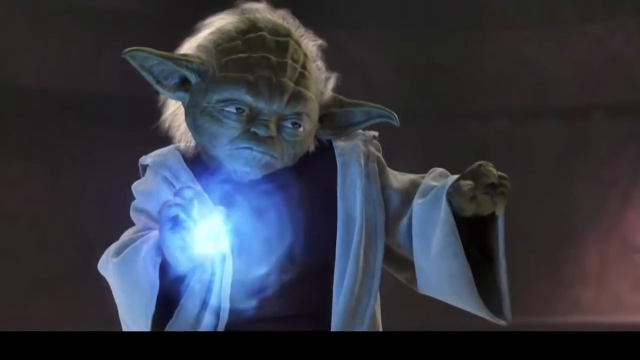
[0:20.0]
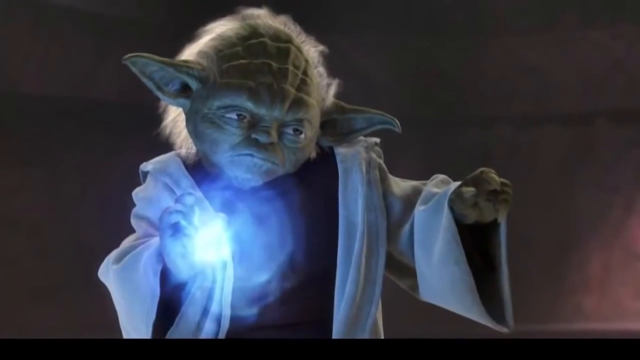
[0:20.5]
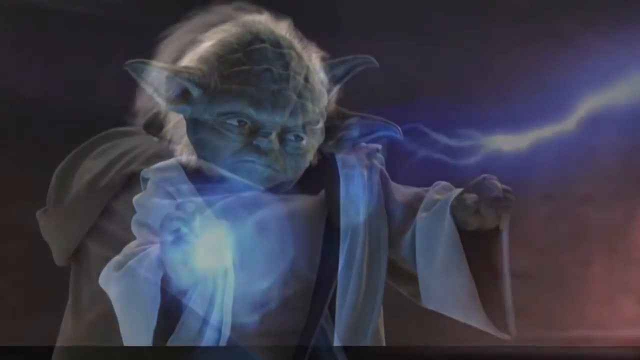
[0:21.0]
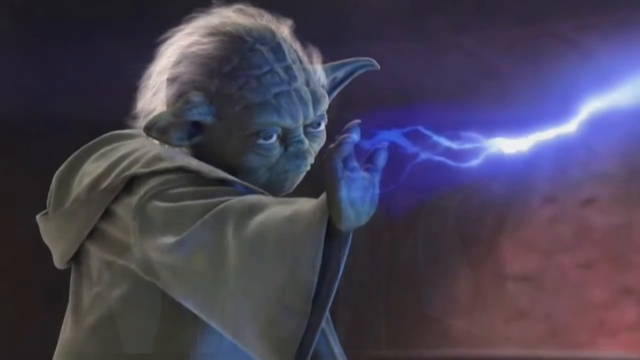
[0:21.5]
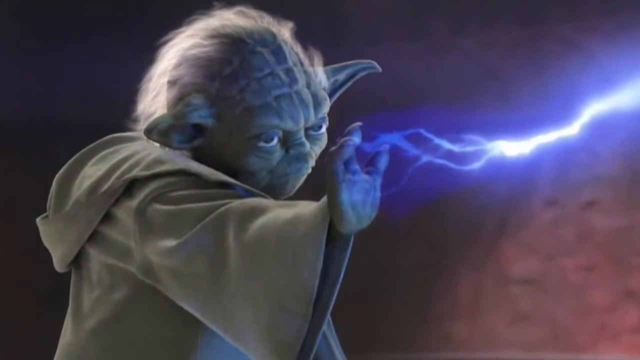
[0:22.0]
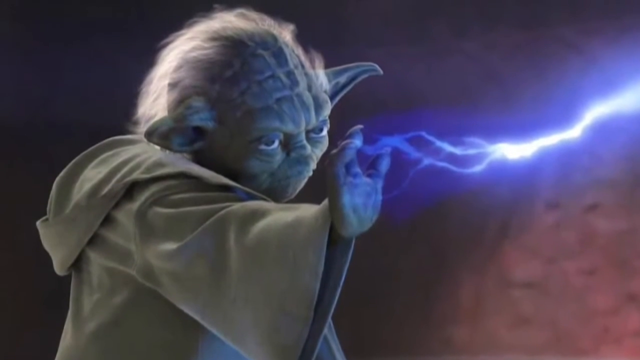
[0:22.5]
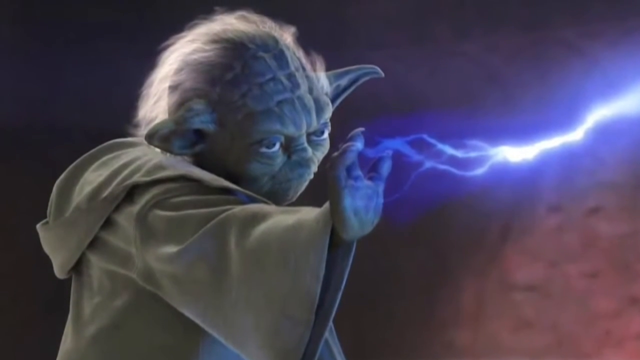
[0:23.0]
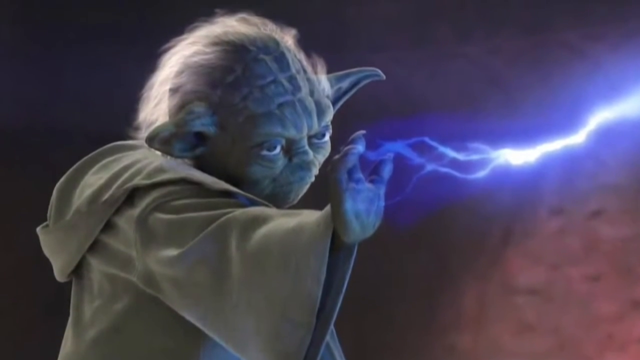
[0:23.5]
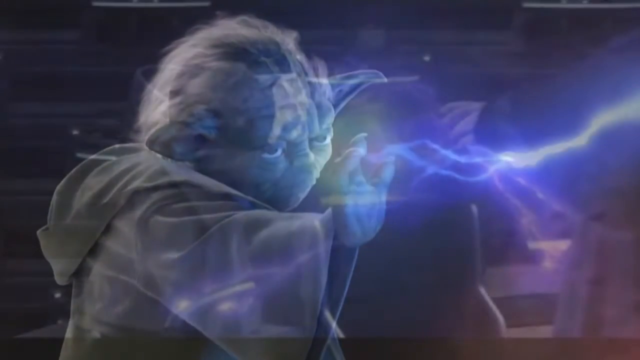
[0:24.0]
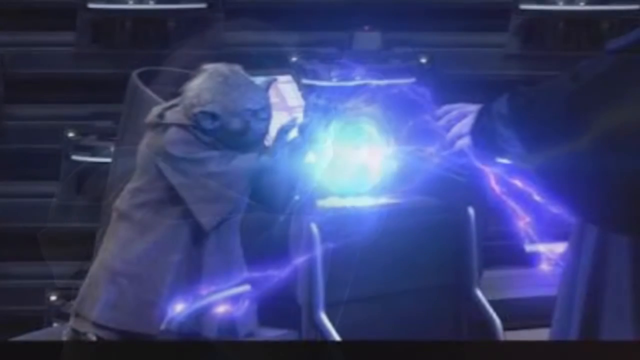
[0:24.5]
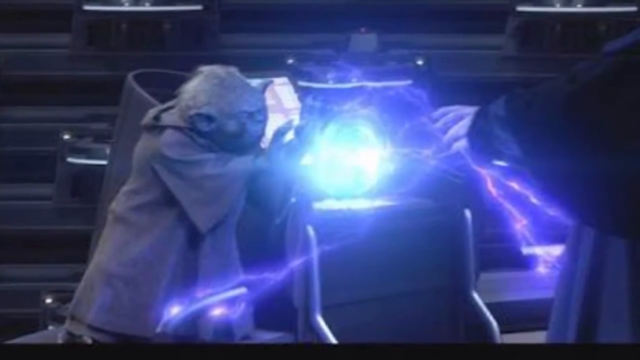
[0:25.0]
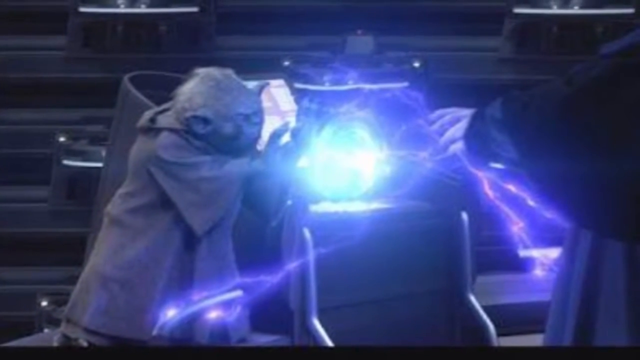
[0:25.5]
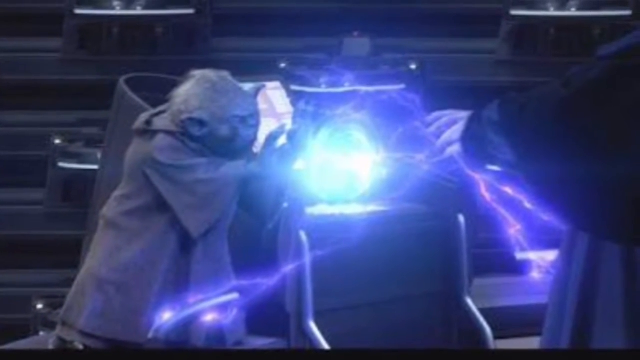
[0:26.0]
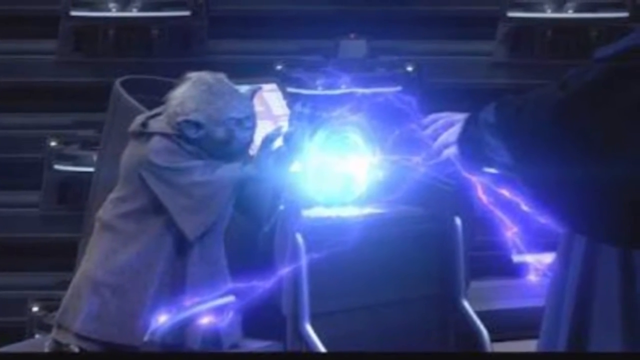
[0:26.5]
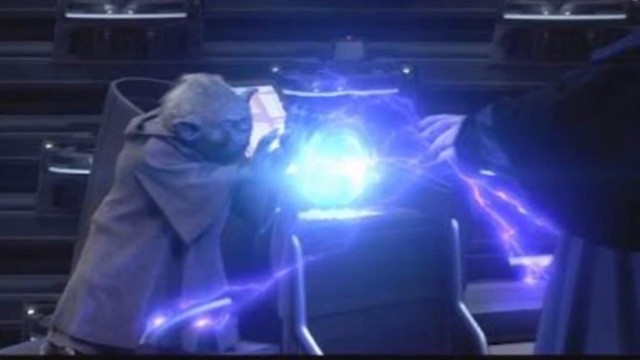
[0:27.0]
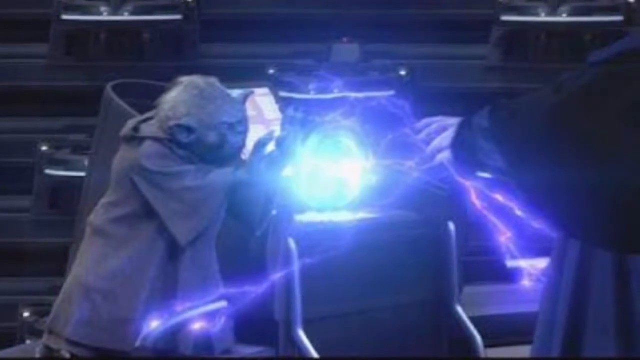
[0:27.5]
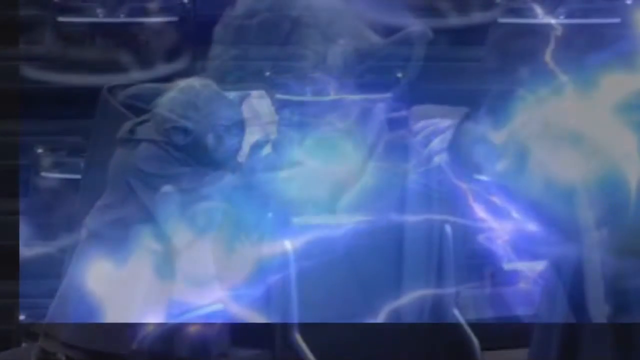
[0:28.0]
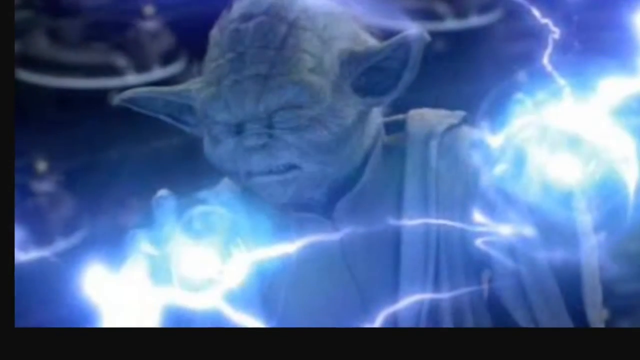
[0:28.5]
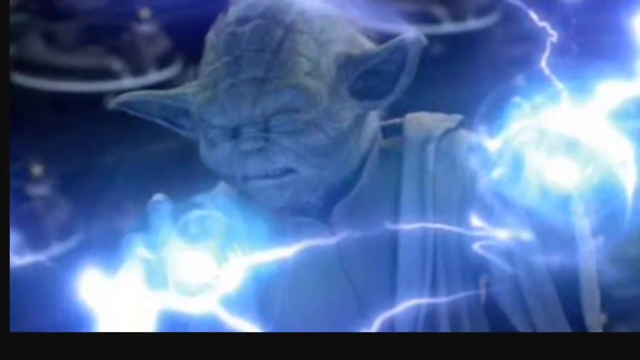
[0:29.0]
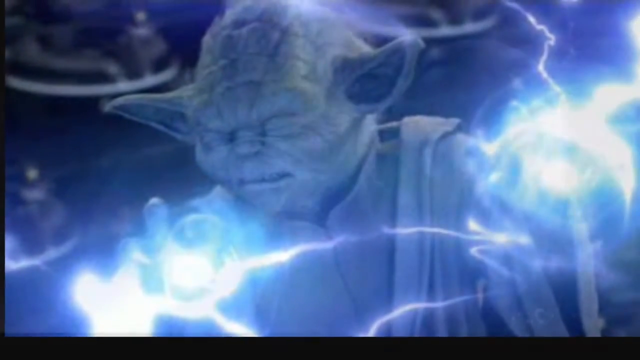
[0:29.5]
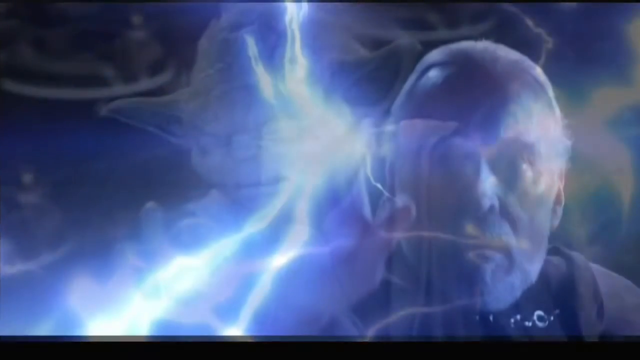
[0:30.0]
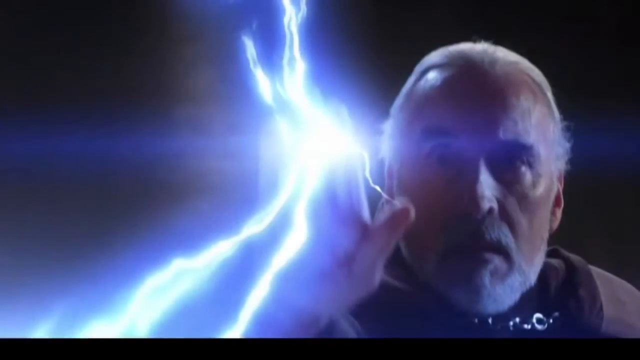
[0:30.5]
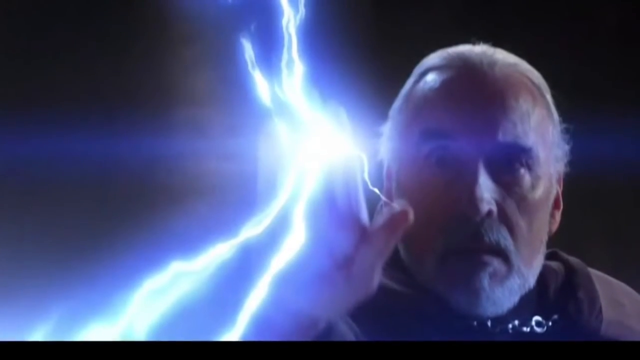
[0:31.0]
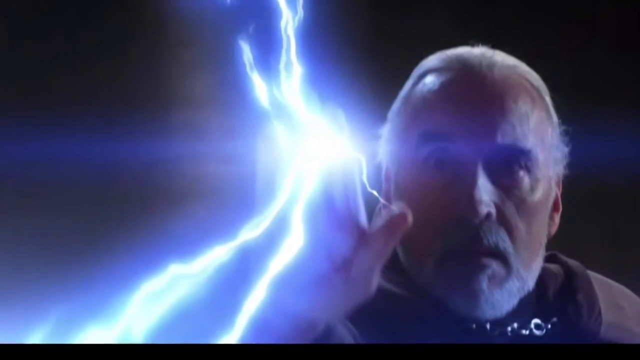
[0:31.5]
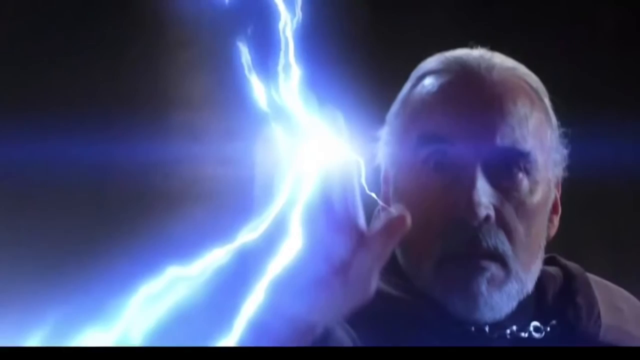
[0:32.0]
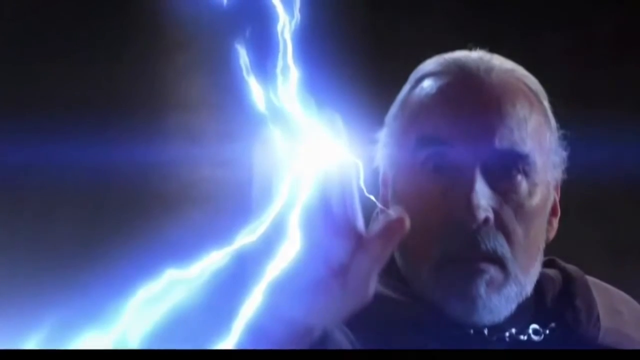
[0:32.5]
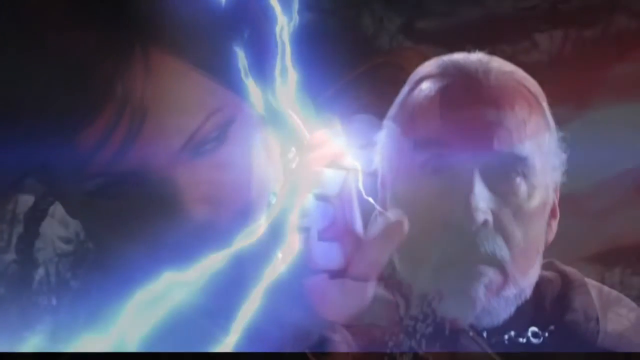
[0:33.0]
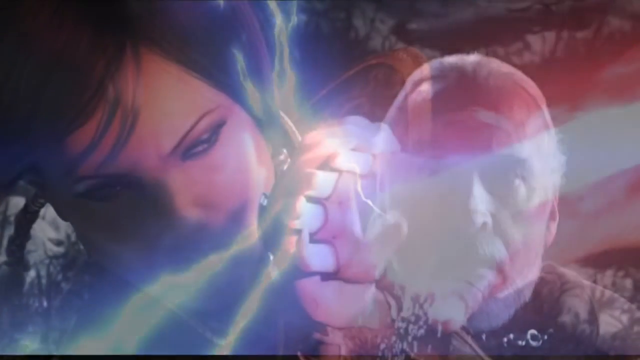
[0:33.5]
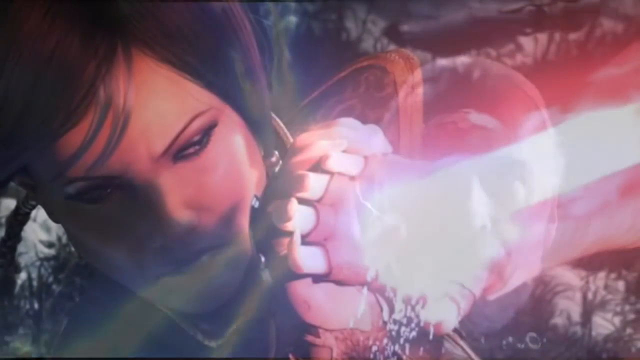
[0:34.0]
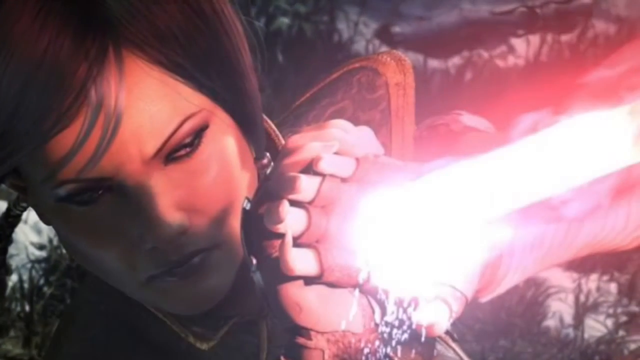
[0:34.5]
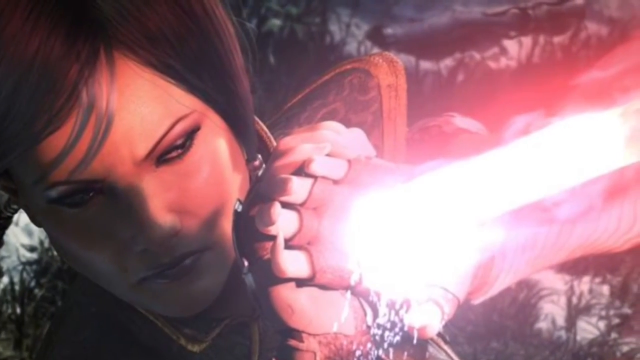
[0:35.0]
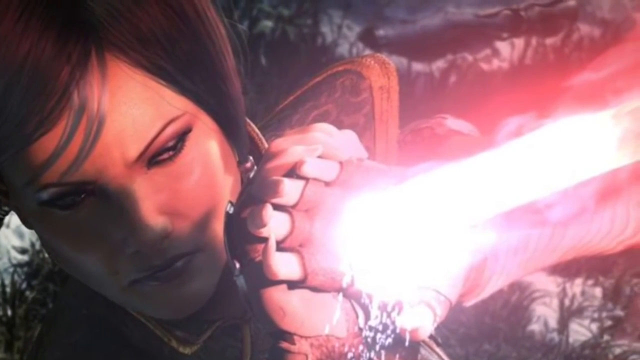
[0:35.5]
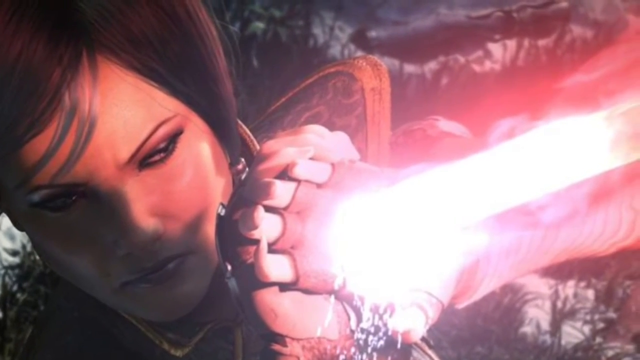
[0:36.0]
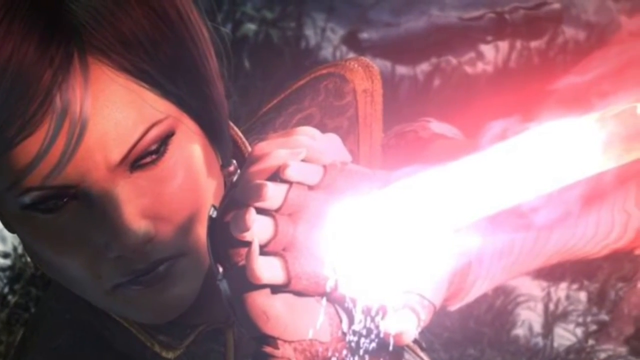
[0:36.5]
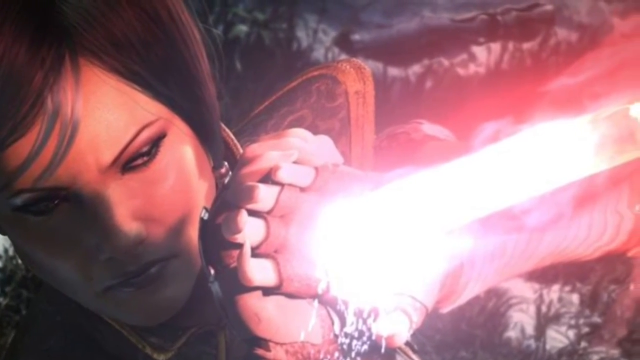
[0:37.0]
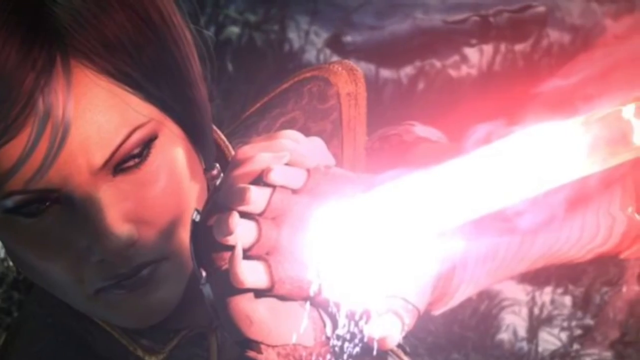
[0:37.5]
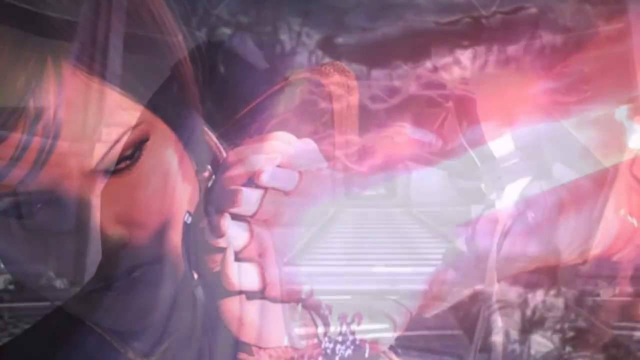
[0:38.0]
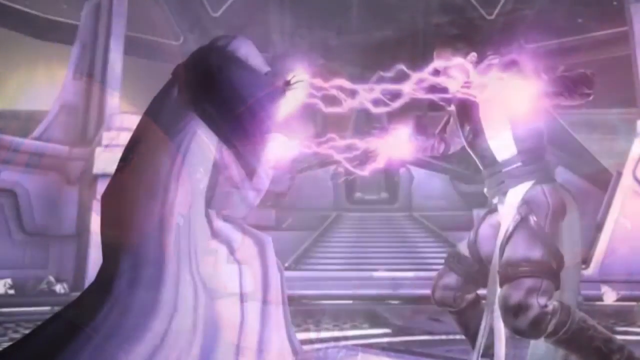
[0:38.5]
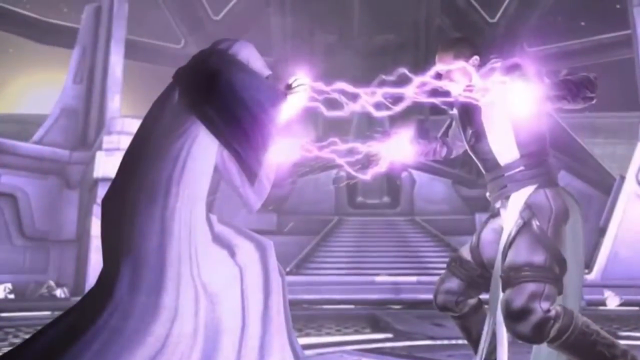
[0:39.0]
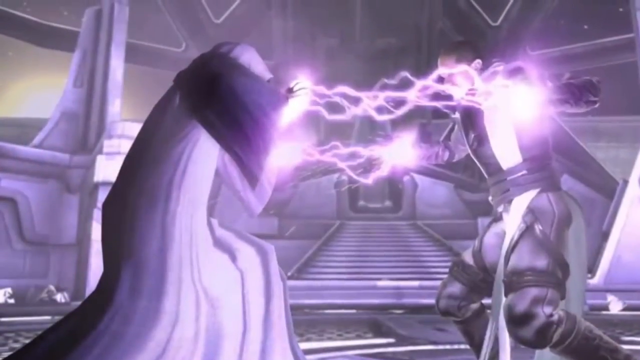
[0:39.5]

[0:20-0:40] An avatar, cartoon-like, creates lightning, and a man tries to touch it. A woman is pierced by the blinding light from the lightning; once the lightning comes in contact, it sparkles a lot. The avatar wears a hooded long jacket and has white hair and pointed ears. The woman showered with blinding light is wearing red. The avatar uses blinding lightning to fend off enemies, creating a kind of lightning on its own.